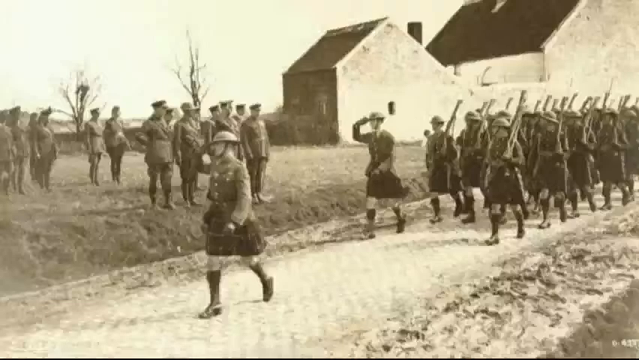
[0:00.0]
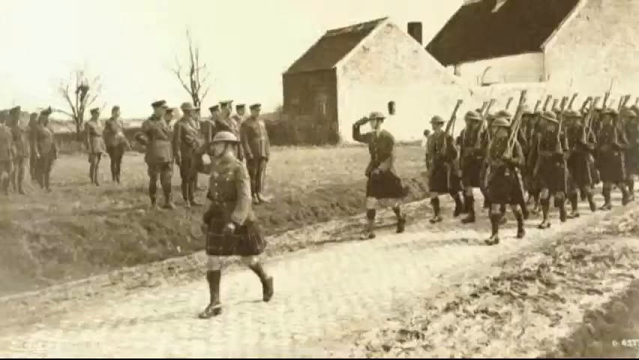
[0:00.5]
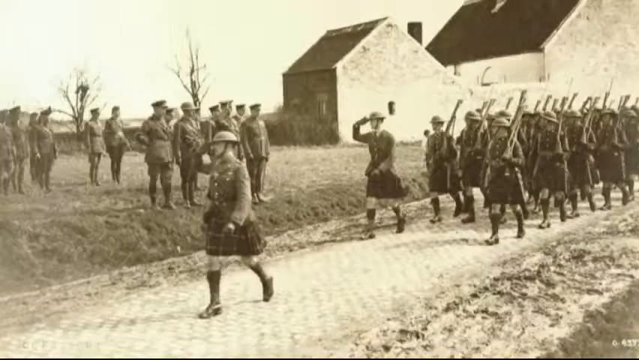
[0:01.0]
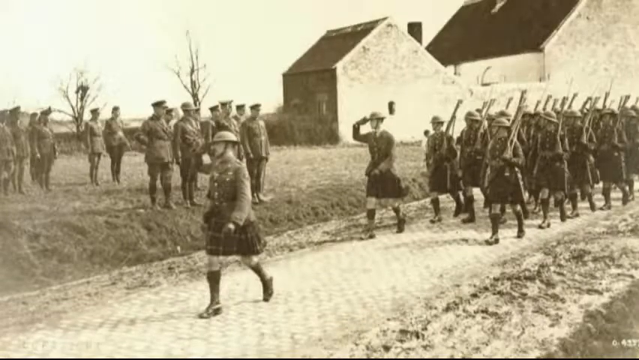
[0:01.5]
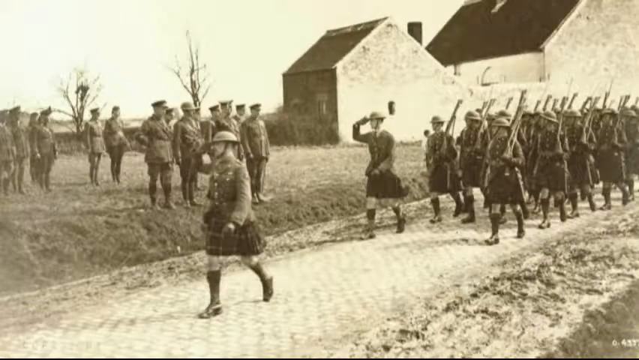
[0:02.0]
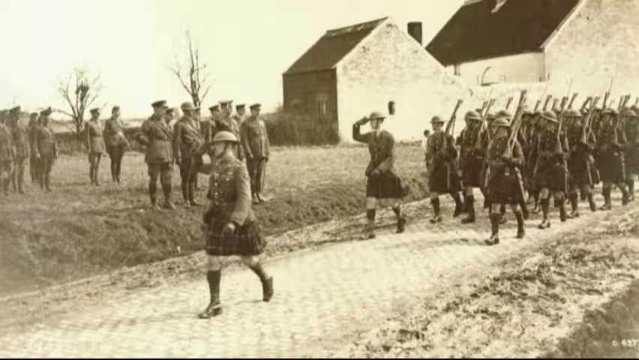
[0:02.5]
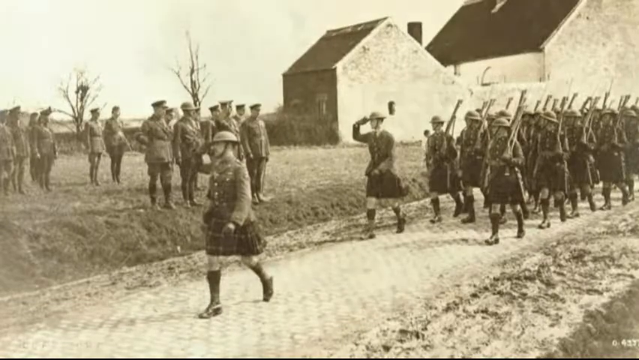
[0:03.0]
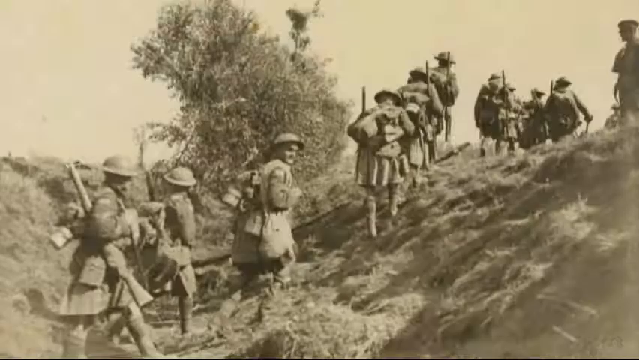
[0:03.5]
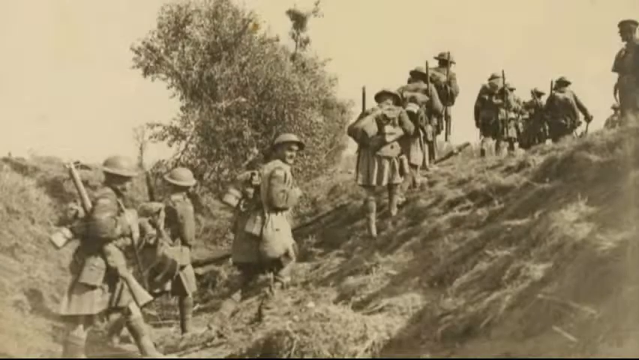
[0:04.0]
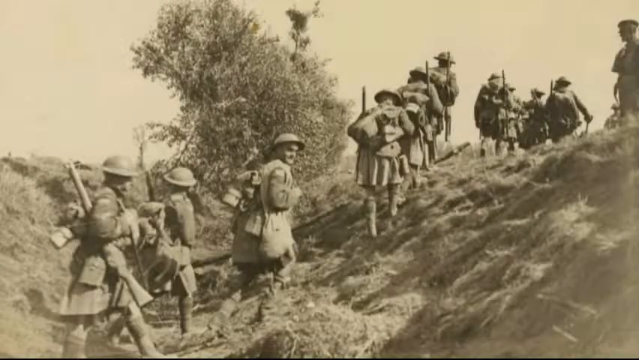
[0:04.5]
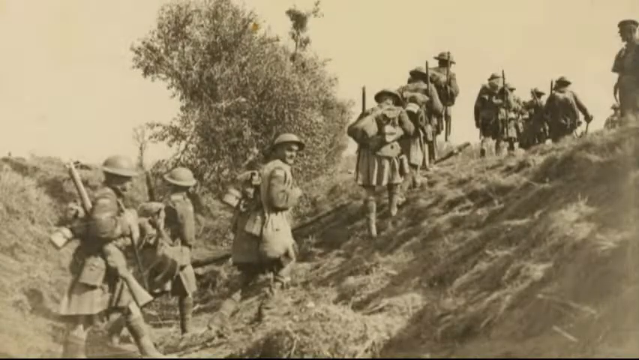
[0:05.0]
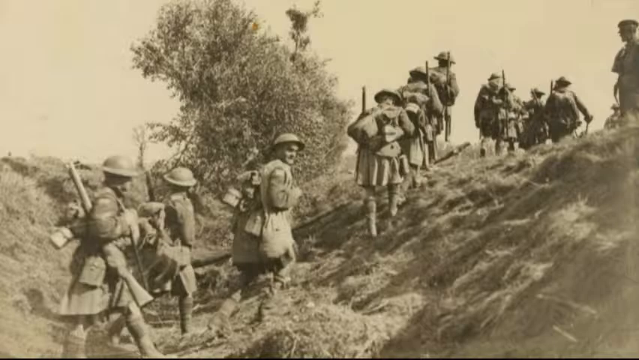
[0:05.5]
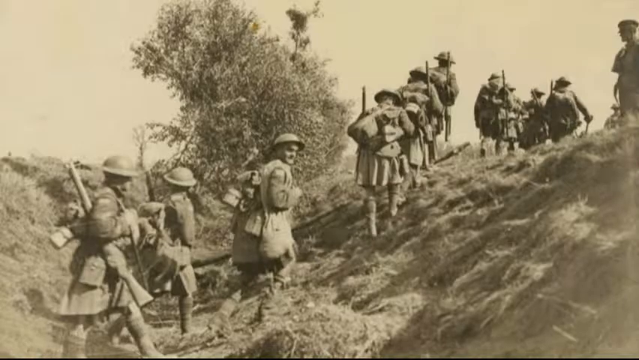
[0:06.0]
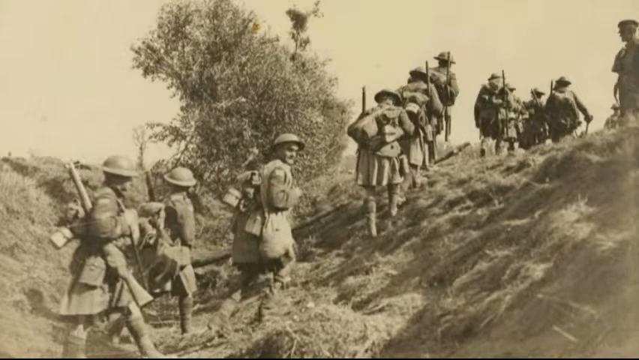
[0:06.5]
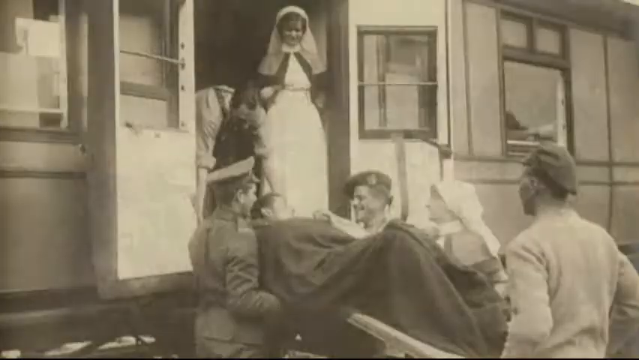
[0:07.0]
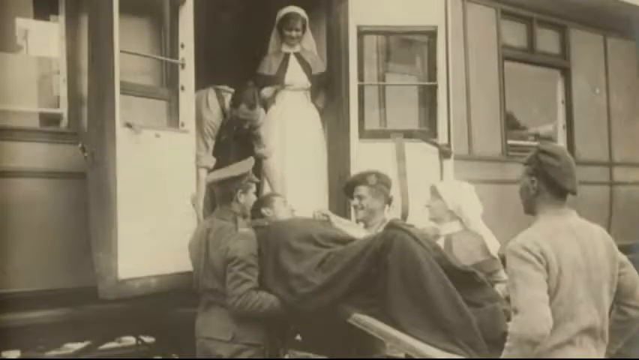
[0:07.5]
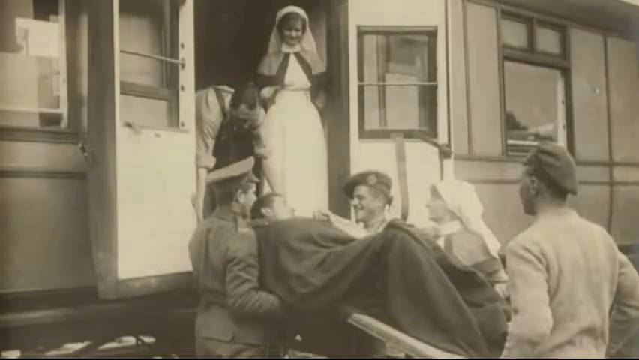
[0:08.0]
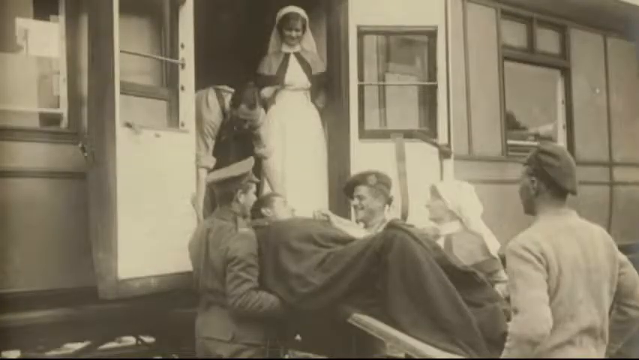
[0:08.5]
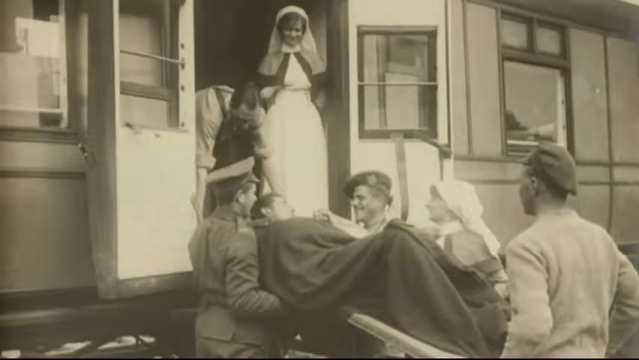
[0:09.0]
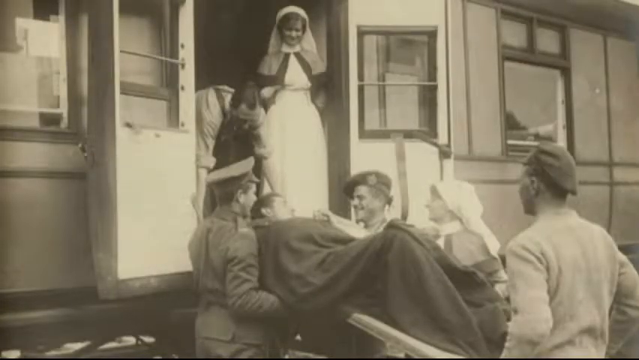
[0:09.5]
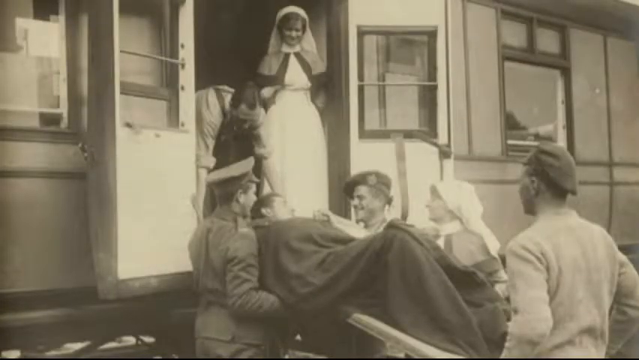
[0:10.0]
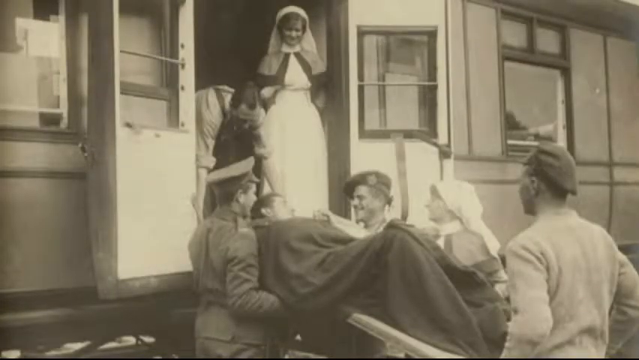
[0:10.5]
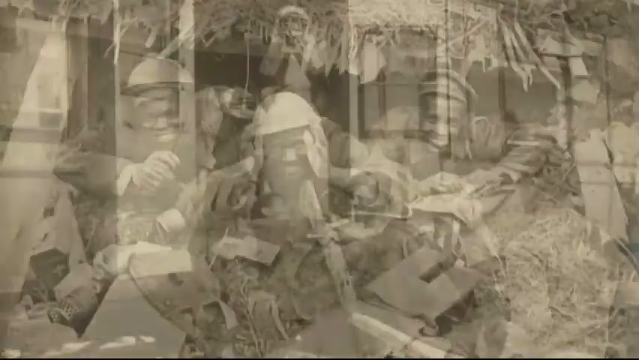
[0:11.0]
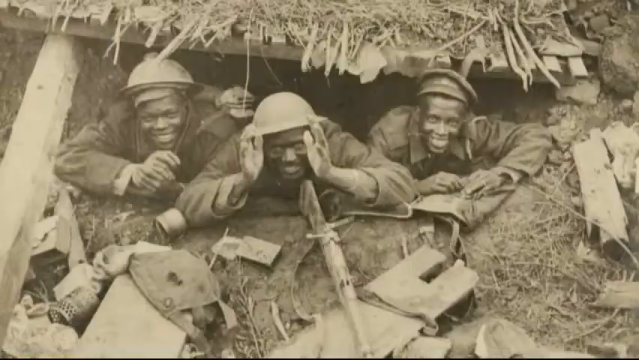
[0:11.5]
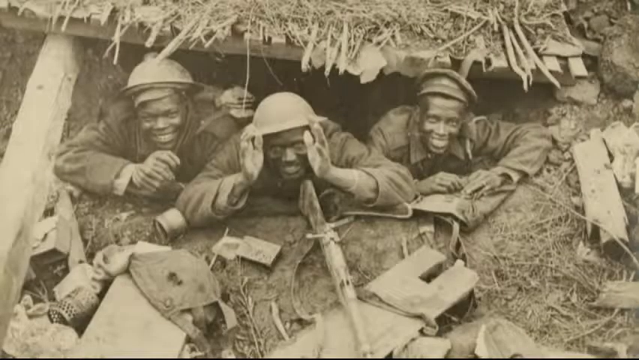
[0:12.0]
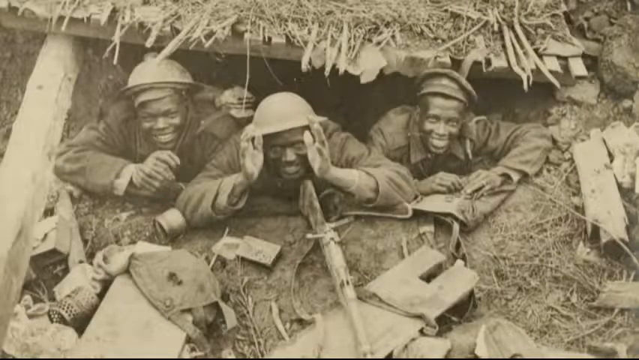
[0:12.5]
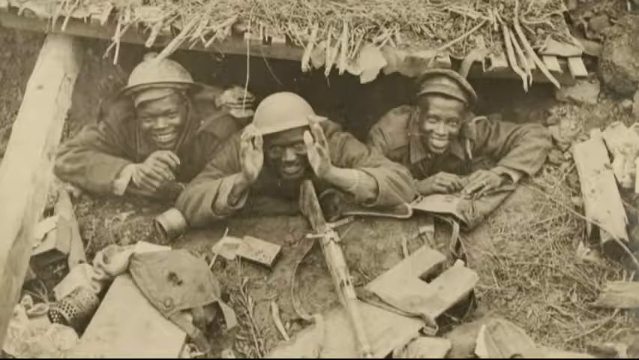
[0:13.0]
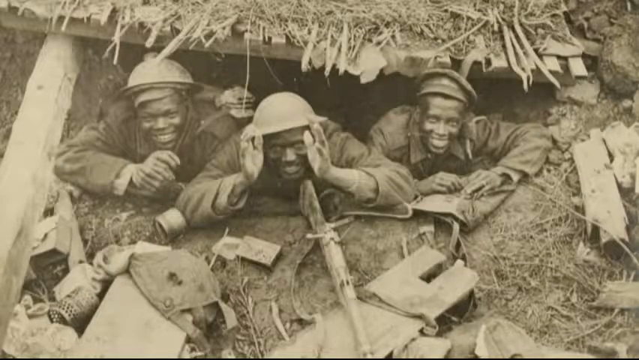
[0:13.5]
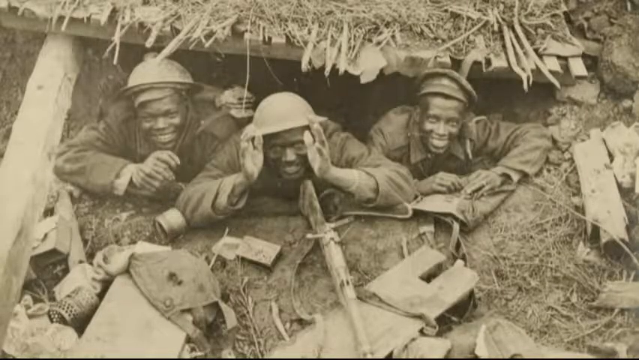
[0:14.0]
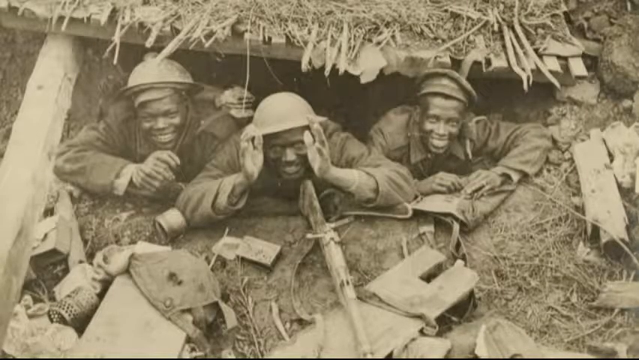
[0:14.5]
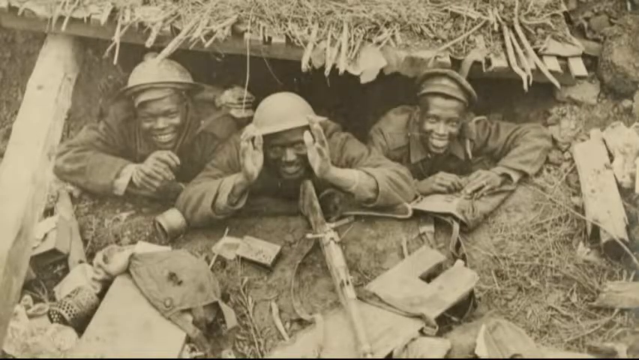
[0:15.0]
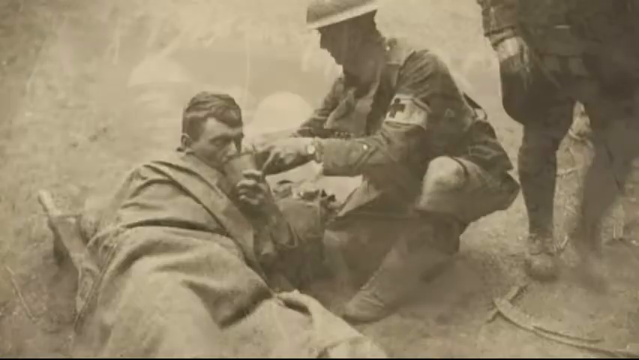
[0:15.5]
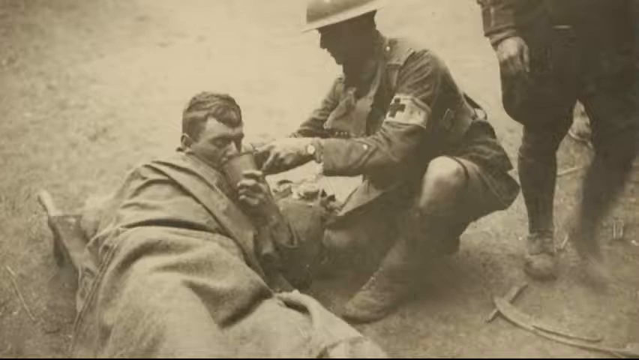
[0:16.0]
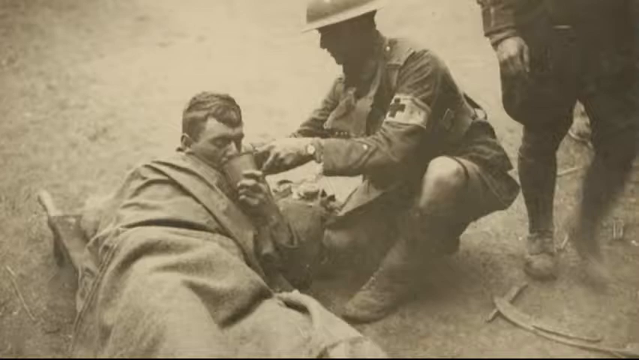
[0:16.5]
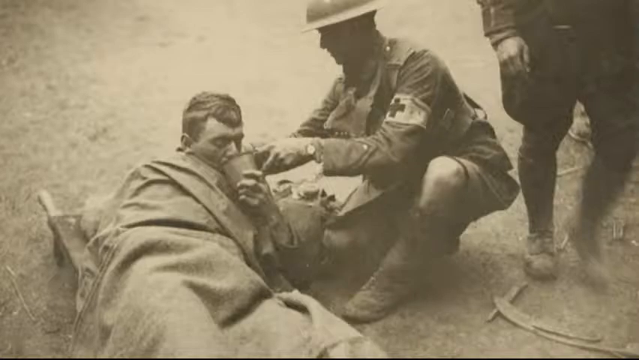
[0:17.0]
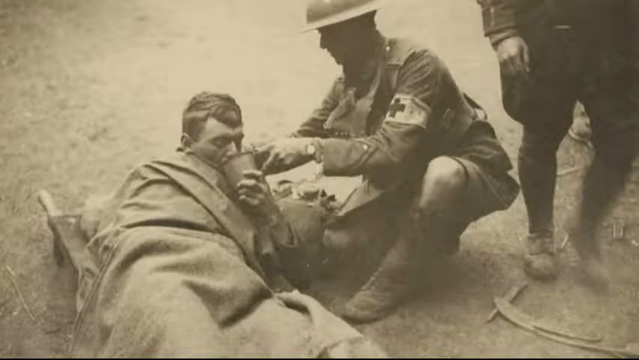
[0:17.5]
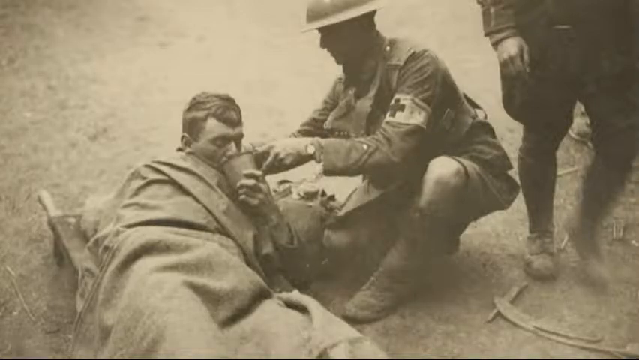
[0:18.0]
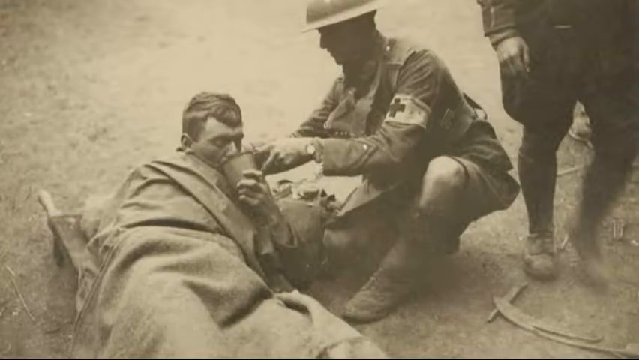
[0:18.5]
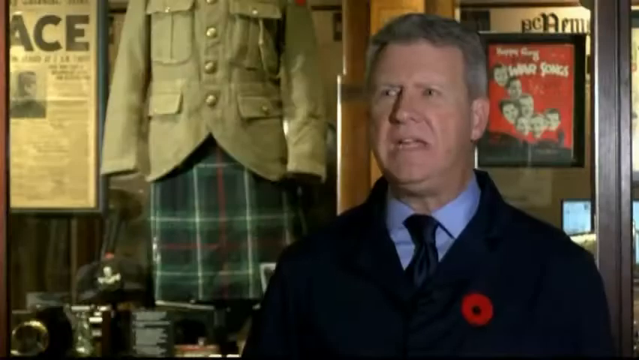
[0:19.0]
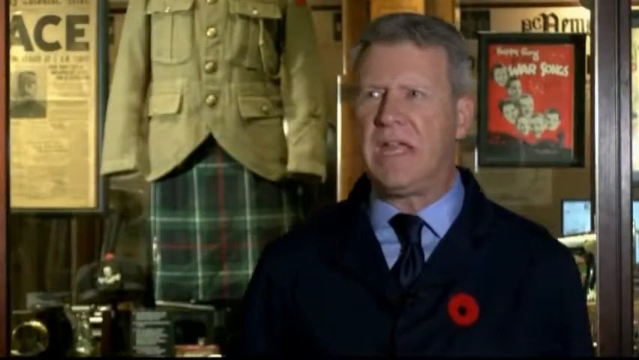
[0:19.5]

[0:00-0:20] A black-and-white picture shows a small house in the background with a bigger building to its right that may be a barn. Soldiers stand in the yard facing a road. On the dirt road in front of them, a group of soldiers dressed in kilts and helmets marches, all holding their guns over their left shoulders. The video cuts to another black-and-white picture of a ditch in the ground, where soldiers in military uniforms and kilts carry guns and backpacks and wear helmets. Next comes a picture of a white building with a nun in a white dress and a nun hat standing in the doorway. Coming into the door is a man with a blanket over him, with a soldier in a gray uniform on one side and a soldier in a gray hat on the other, and another nun; they carry the man inside the house, though it is only a still picture. Another picture shows a hole in the ground with dirt around it, and in the hole are three black men in military uniforms, visible only from the tops of their bodies, all wearing helmets and smiling.